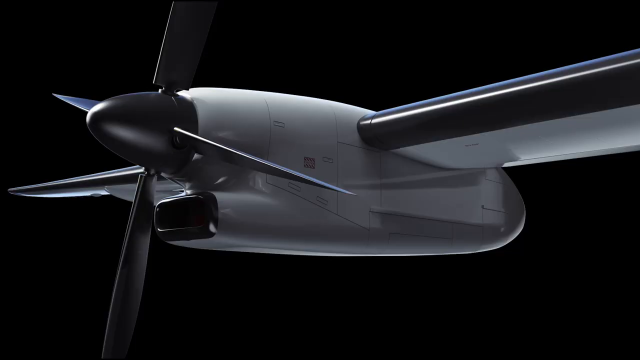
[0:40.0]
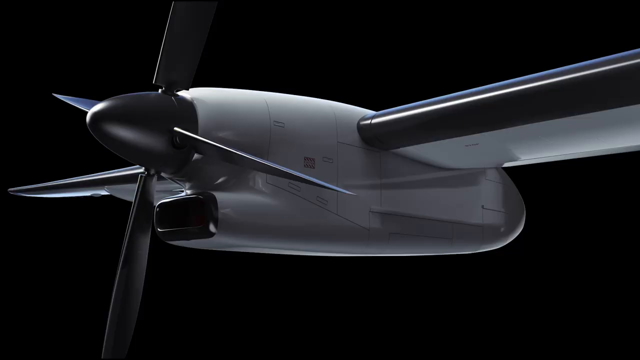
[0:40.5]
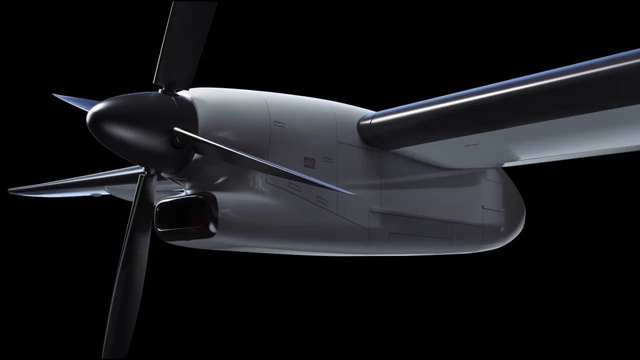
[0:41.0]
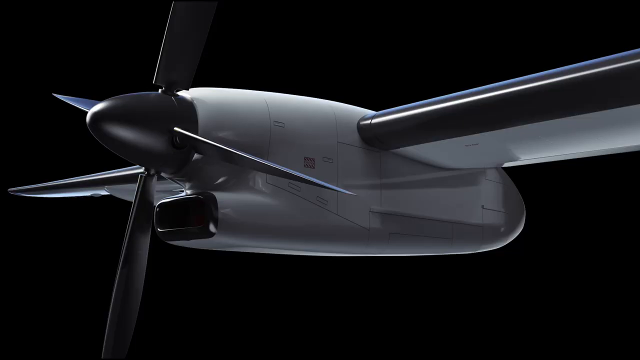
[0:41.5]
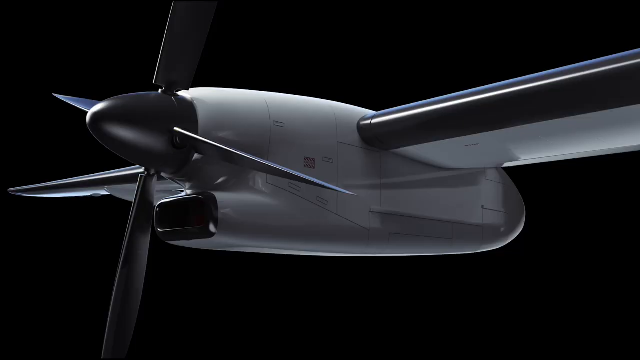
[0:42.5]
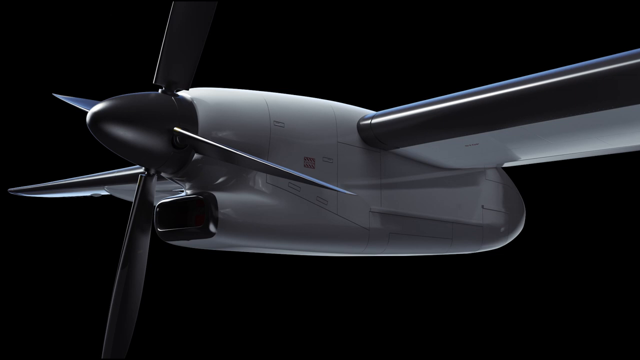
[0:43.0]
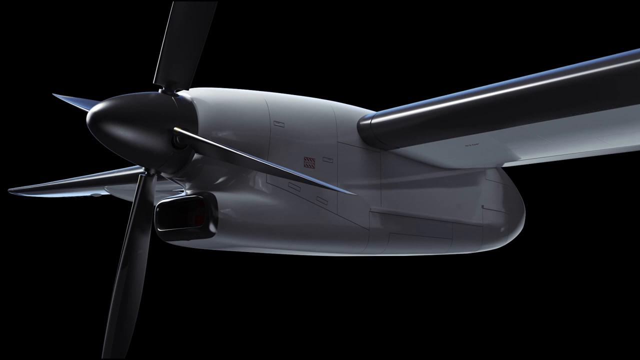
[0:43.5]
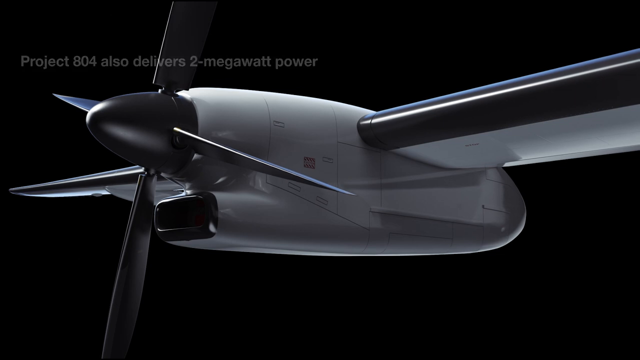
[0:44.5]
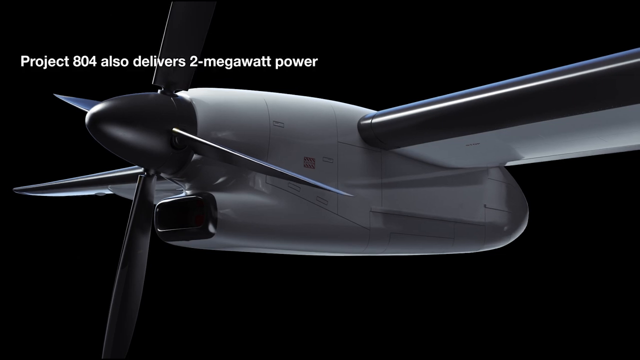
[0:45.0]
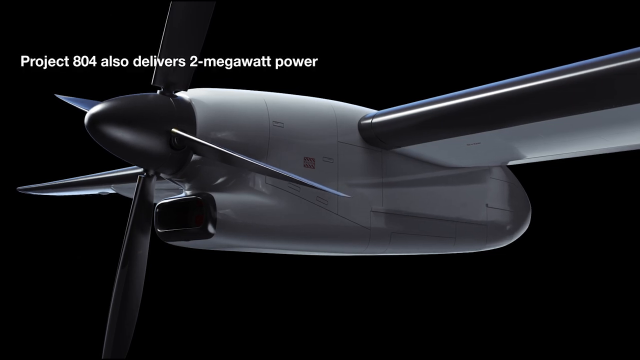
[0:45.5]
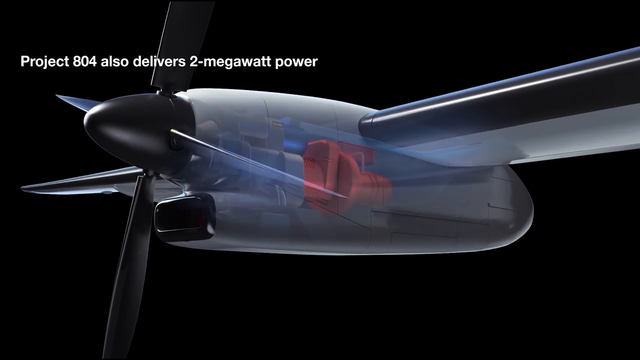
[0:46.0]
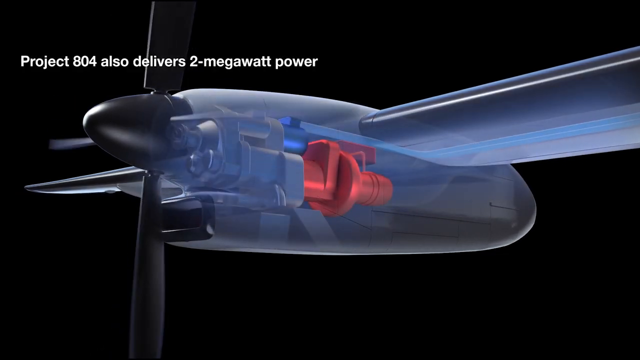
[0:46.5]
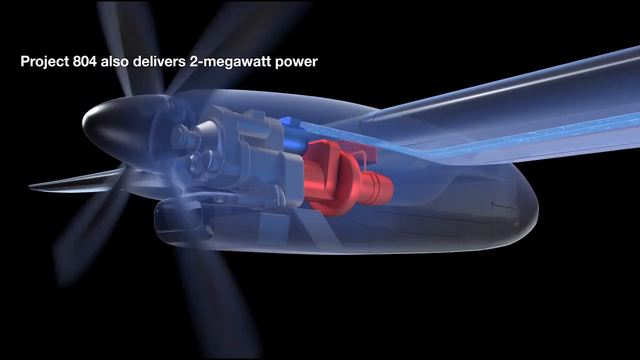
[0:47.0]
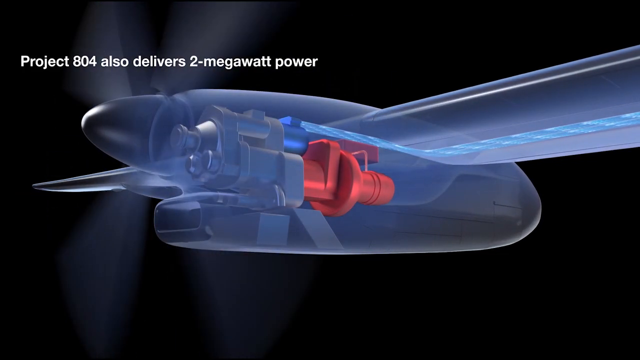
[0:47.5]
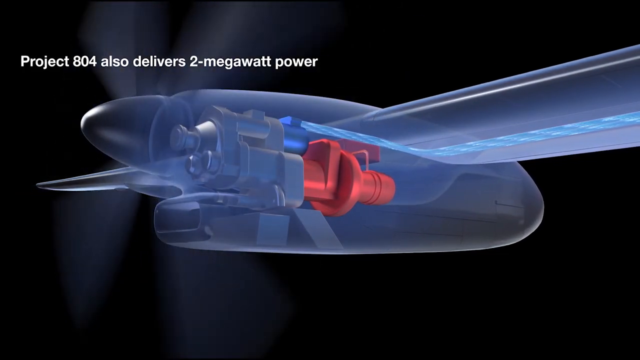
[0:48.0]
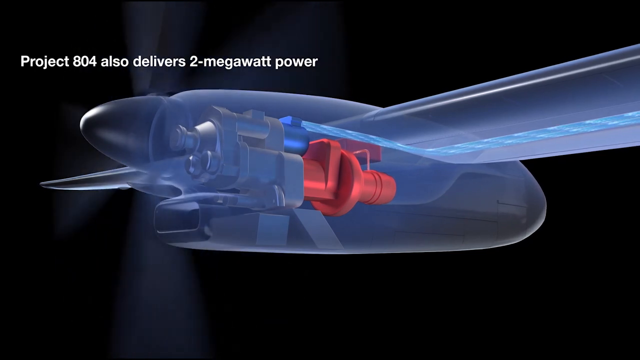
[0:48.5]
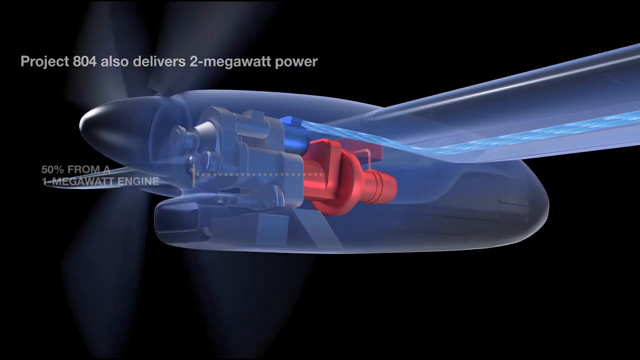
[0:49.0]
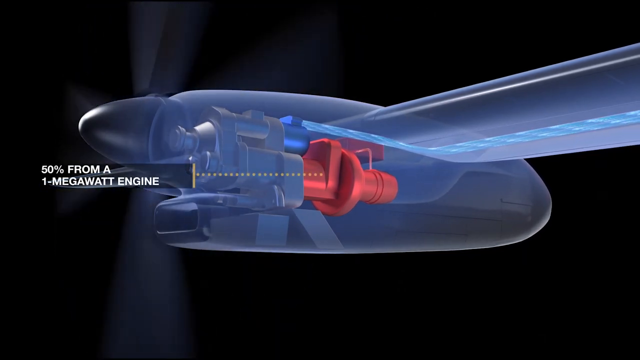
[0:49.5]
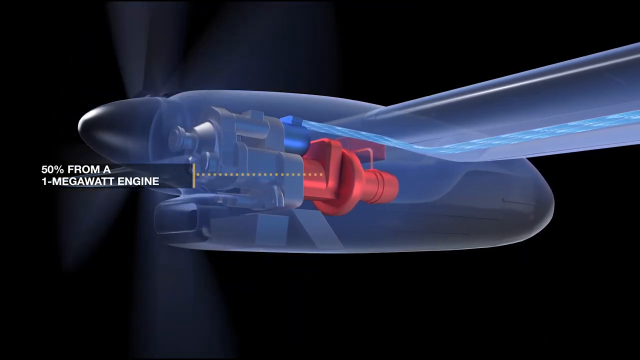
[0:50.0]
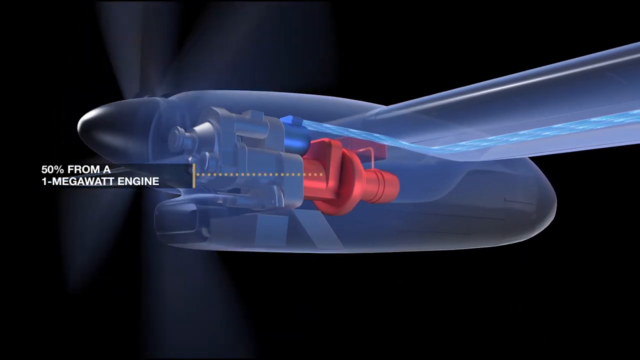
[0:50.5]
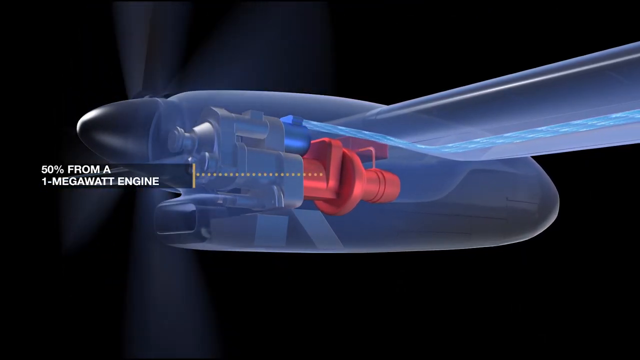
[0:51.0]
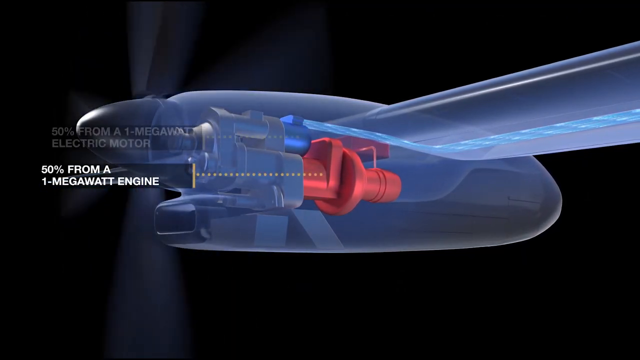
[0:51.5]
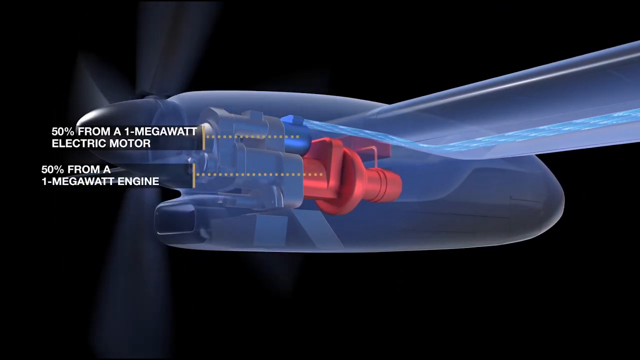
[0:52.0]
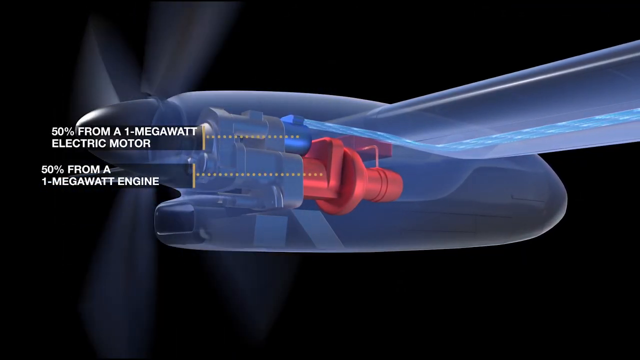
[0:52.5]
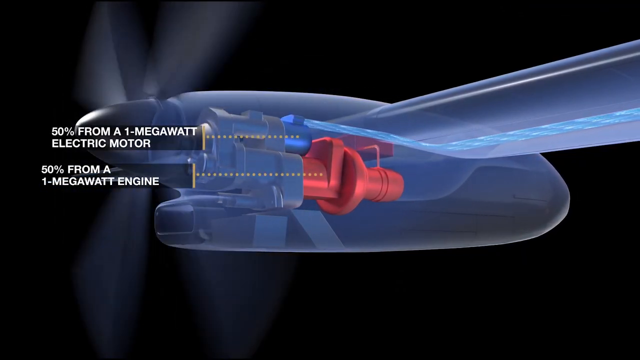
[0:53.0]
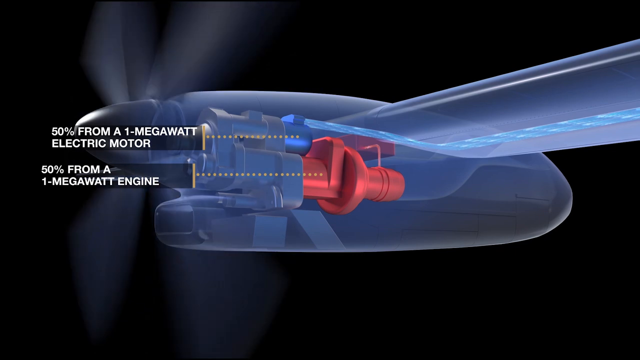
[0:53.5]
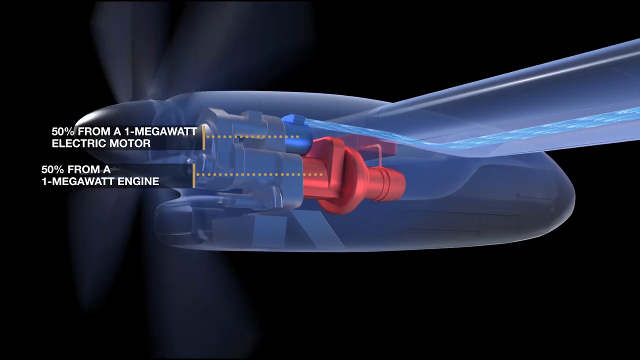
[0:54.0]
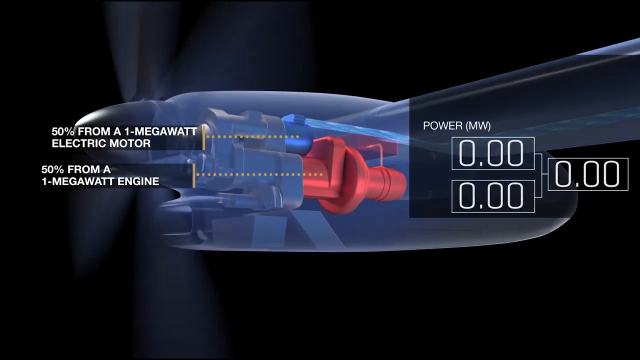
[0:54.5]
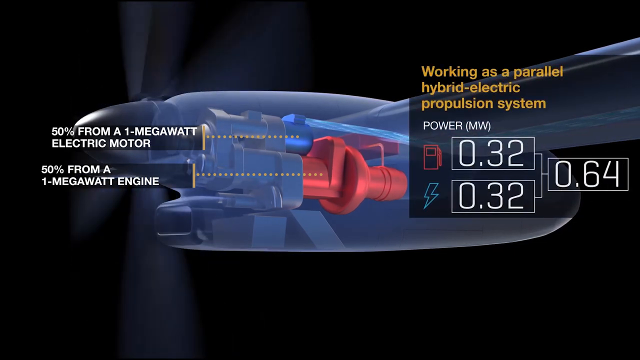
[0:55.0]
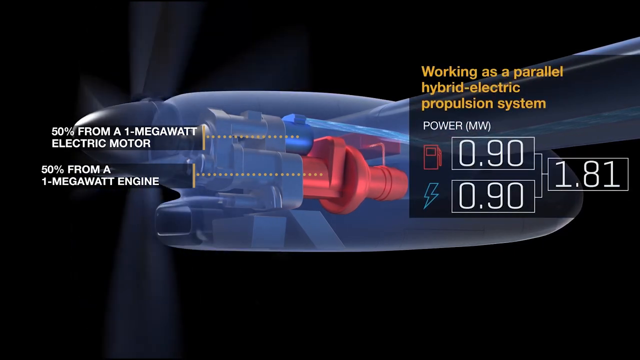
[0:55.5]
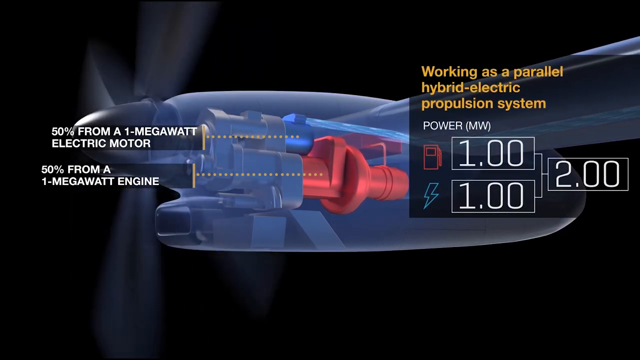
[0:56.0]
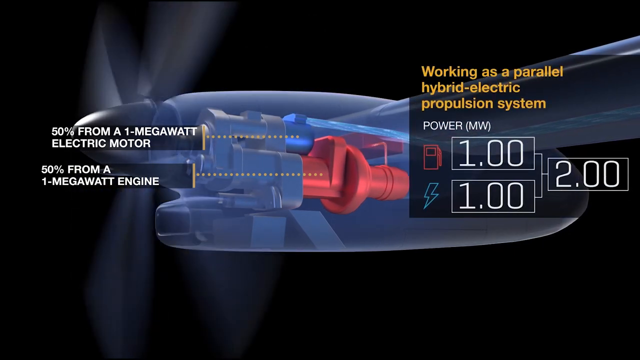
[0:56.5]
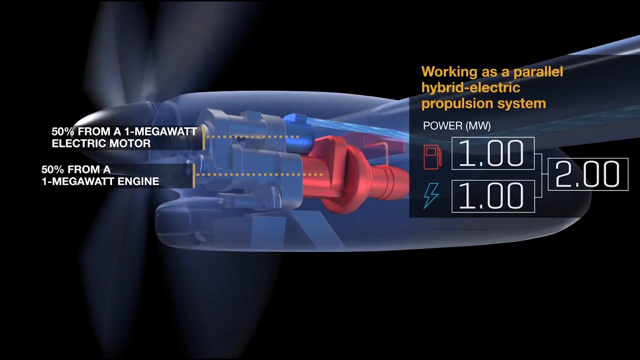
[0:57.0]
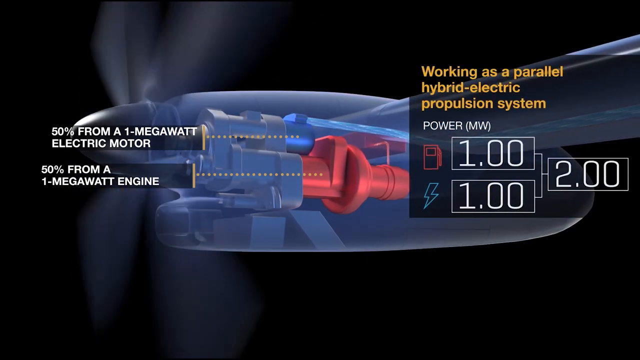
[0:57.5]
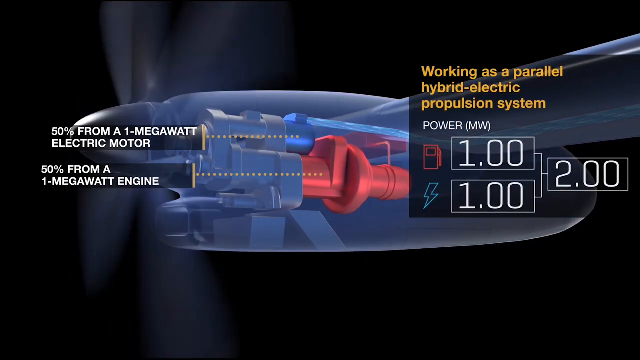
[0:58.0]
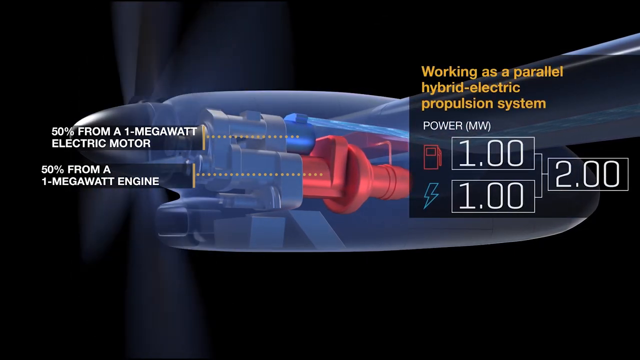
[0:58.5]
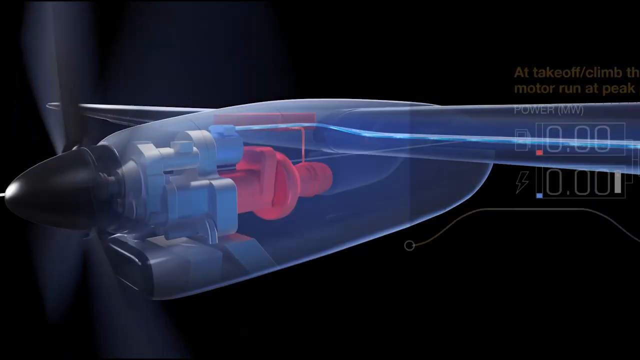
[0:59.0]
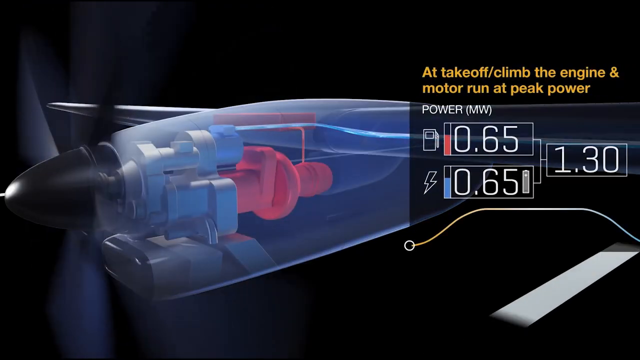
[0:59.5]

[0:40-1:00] A close-up shows the electric motor design and propeller design for the wing, with a shadow visible on the propeller. It is apparently a mock-up design of what the wings and the electric motor assembly hanging on the wing will look like. At first there is no movement. On-screen text states that Project 804 delivers two megawatts of power, 50 percent from a one megawatt engine and 50 percent from a one megawatt electric motor, working as a parallel hybrid system, and a breakdown of the efficiency is shown before the scene cuts off.